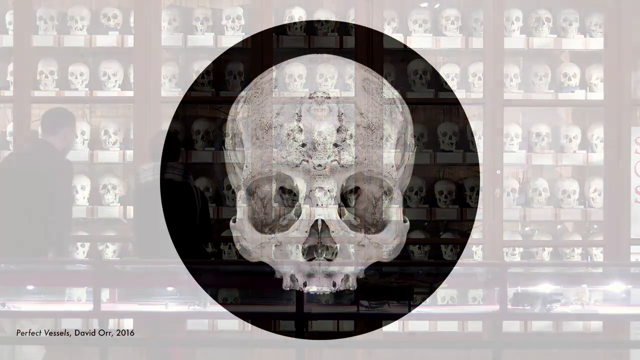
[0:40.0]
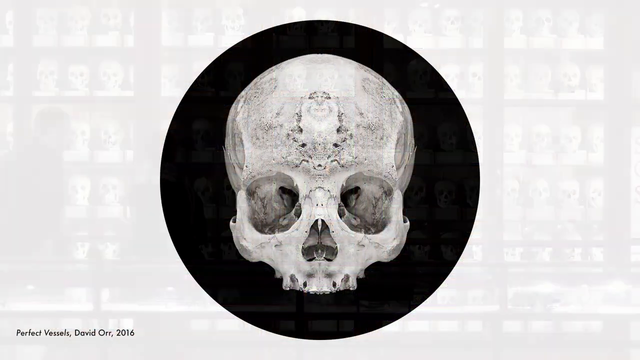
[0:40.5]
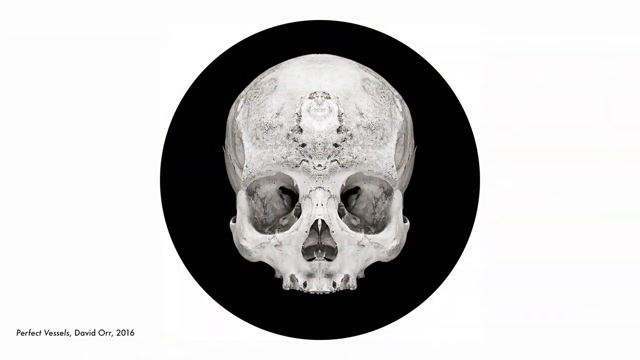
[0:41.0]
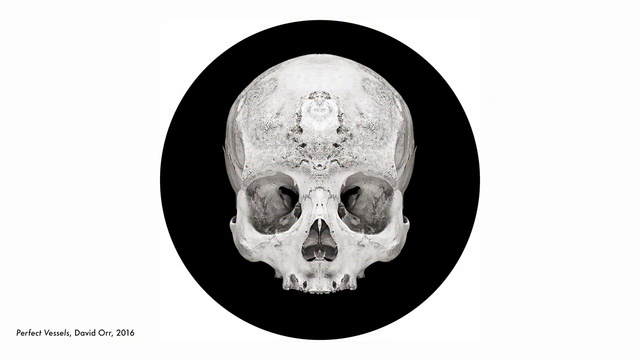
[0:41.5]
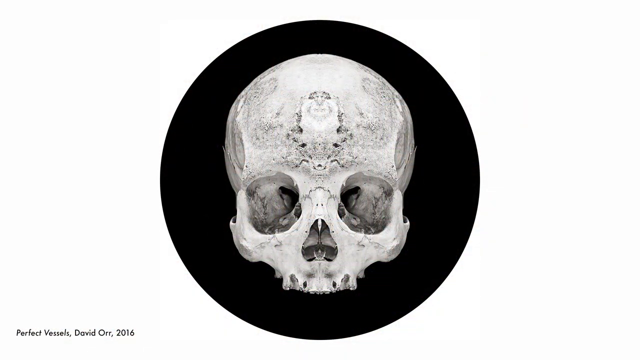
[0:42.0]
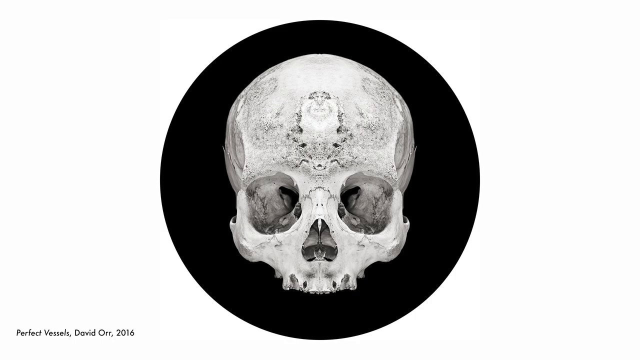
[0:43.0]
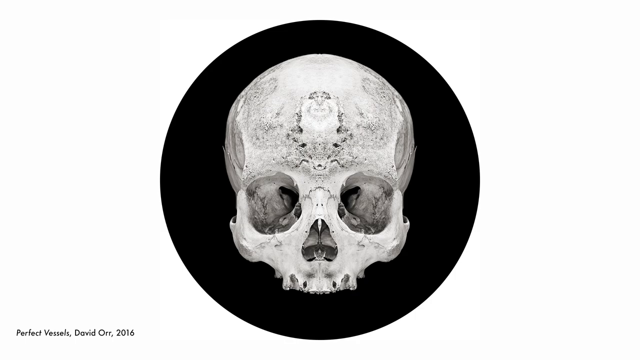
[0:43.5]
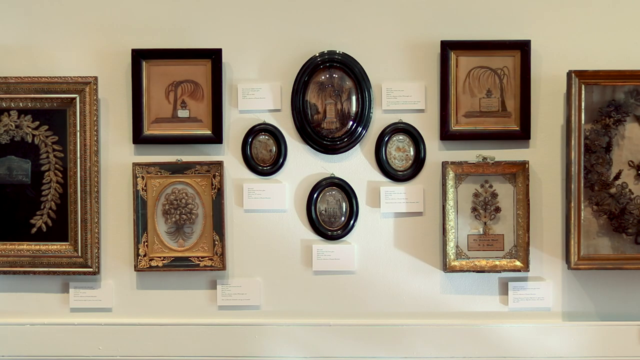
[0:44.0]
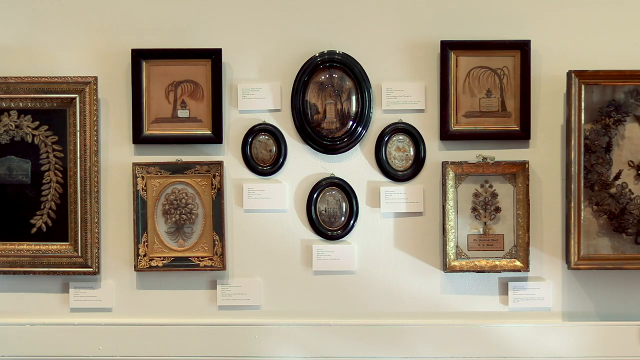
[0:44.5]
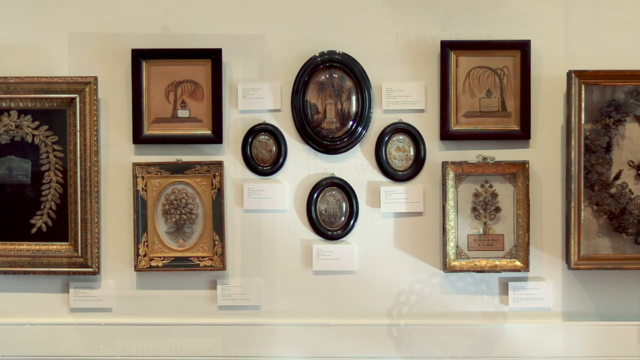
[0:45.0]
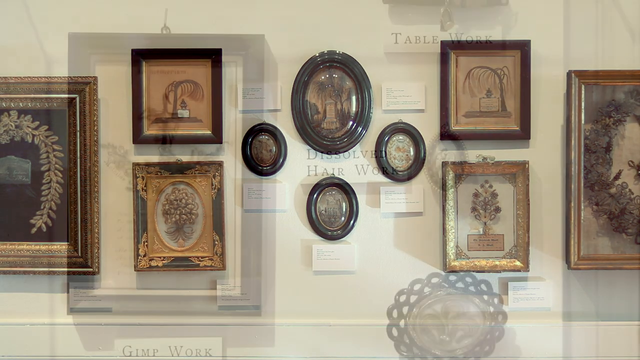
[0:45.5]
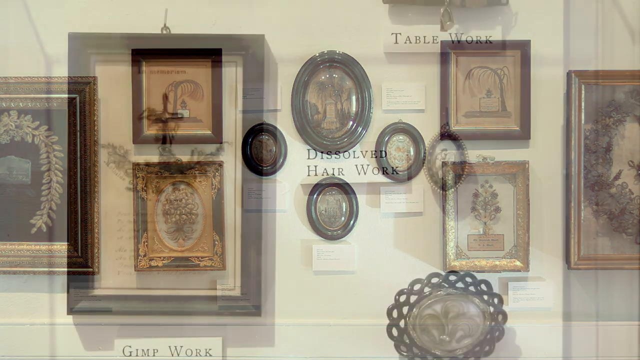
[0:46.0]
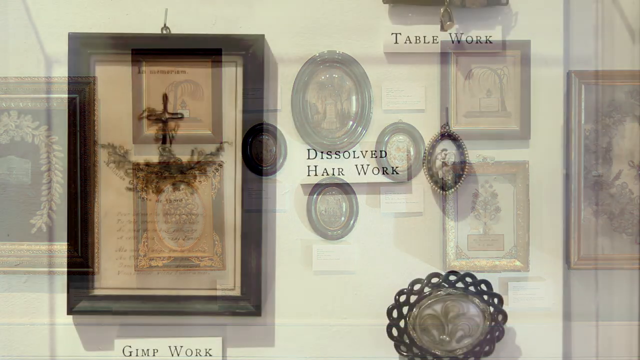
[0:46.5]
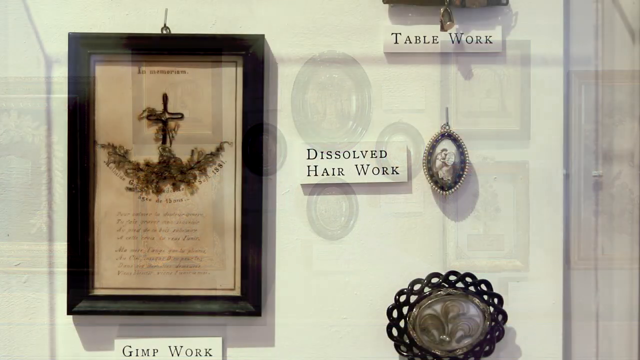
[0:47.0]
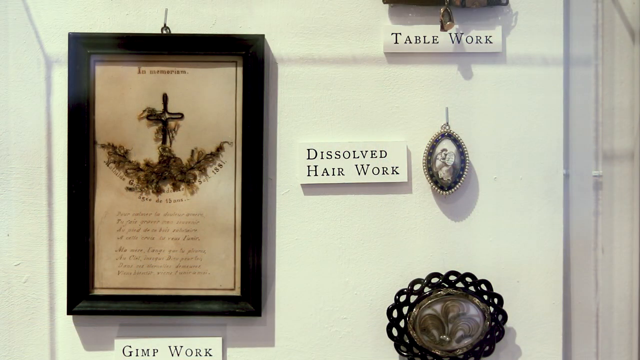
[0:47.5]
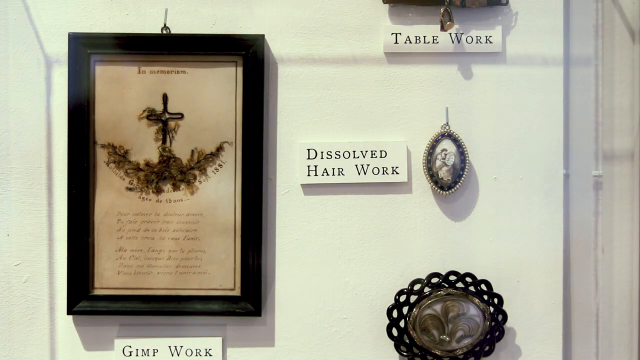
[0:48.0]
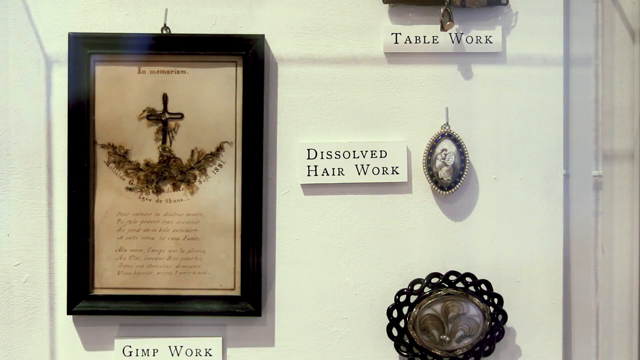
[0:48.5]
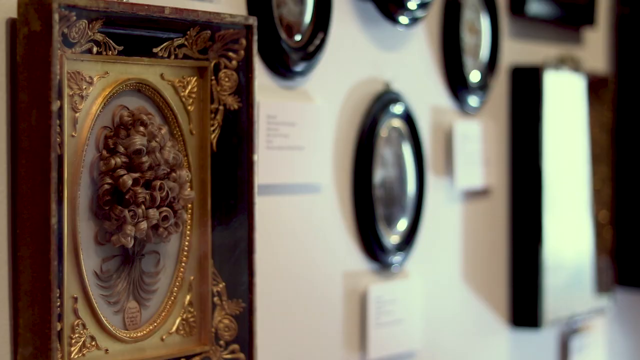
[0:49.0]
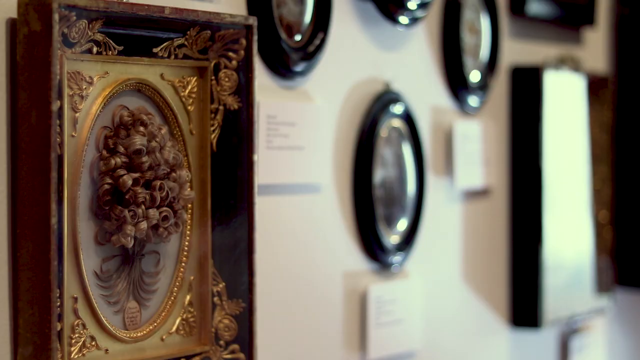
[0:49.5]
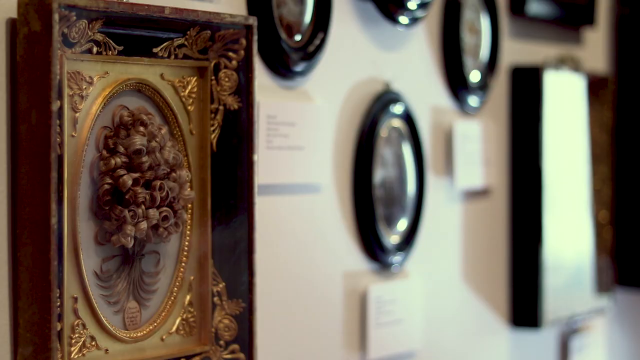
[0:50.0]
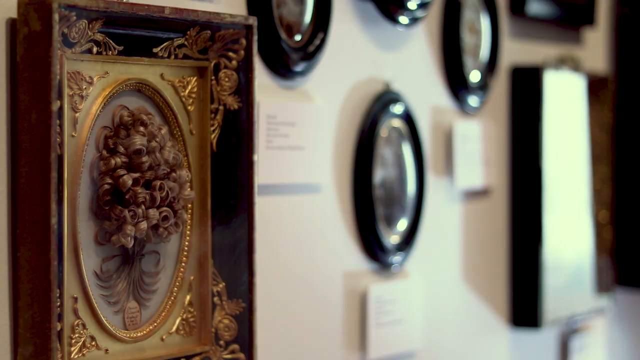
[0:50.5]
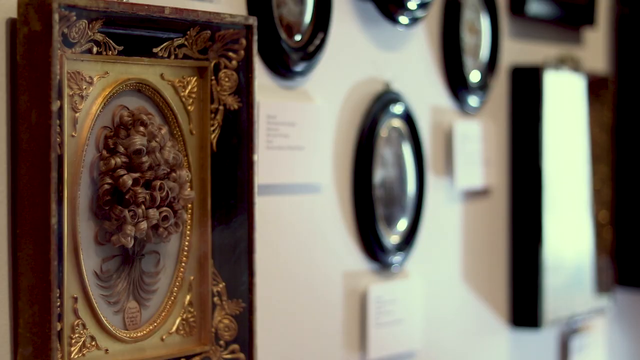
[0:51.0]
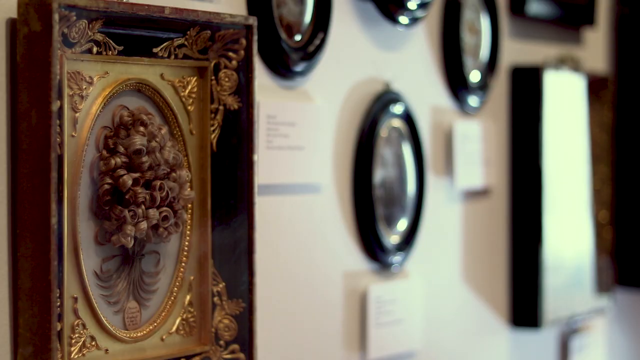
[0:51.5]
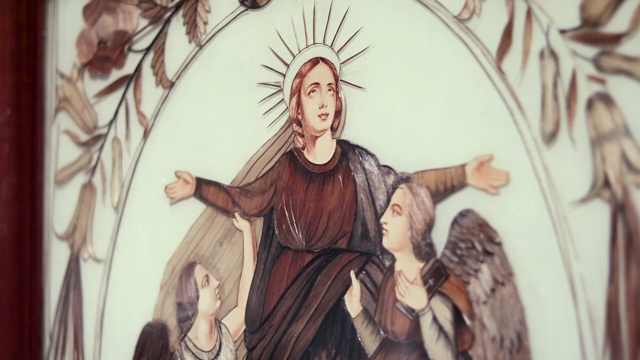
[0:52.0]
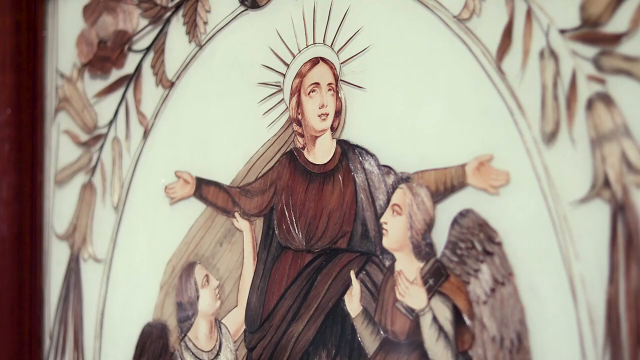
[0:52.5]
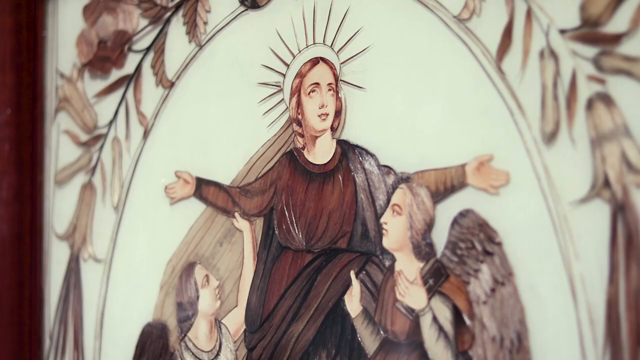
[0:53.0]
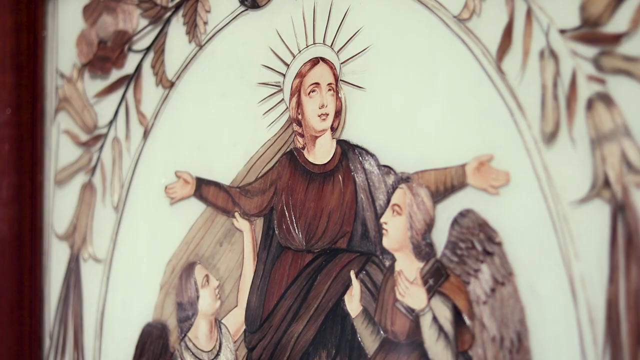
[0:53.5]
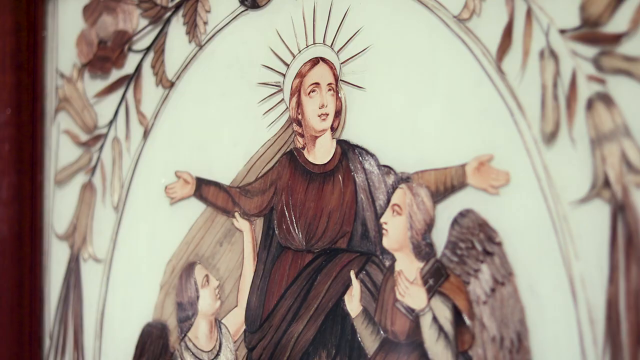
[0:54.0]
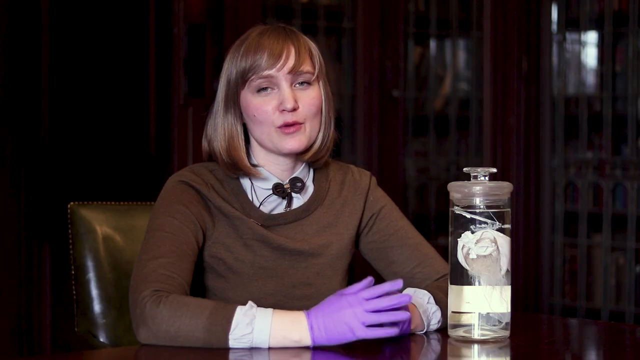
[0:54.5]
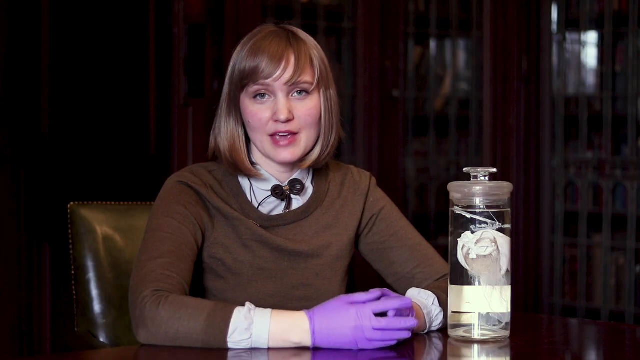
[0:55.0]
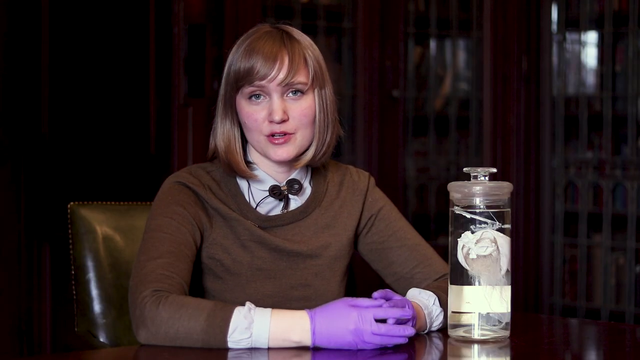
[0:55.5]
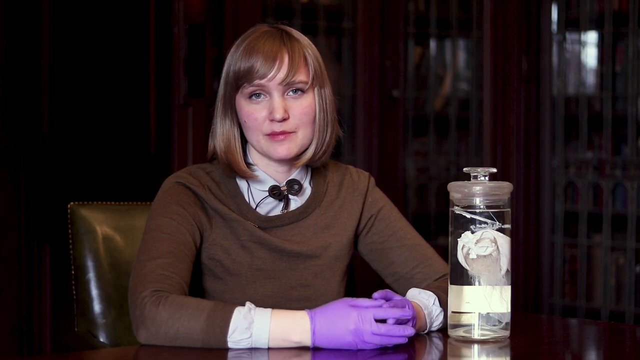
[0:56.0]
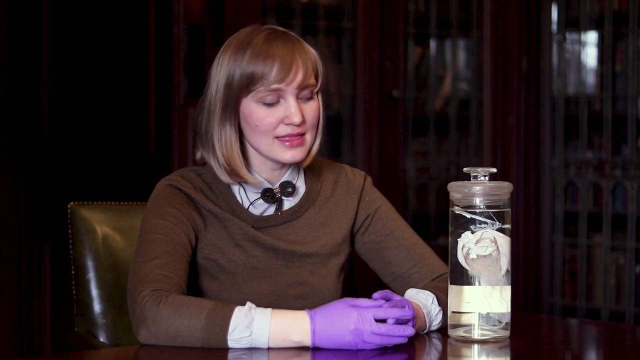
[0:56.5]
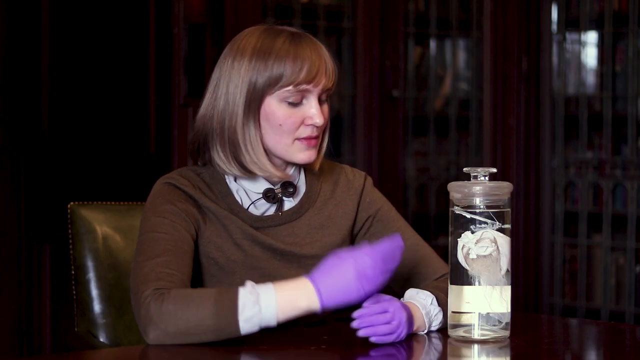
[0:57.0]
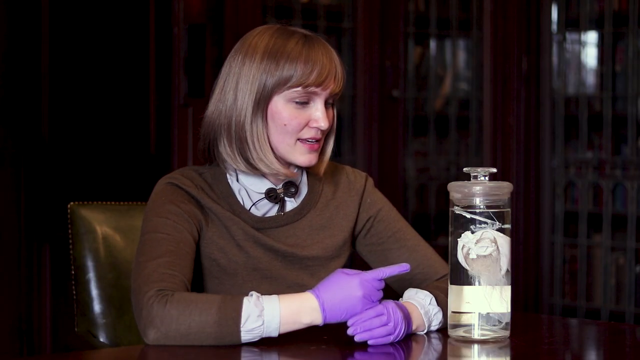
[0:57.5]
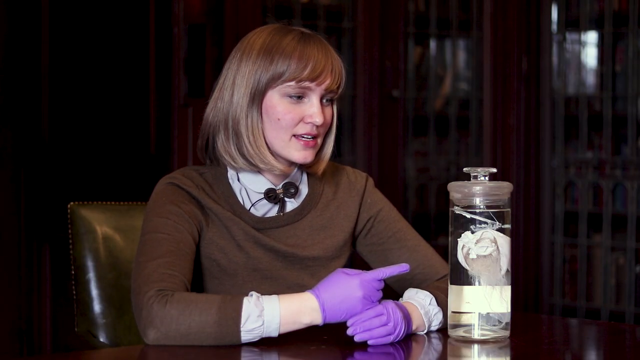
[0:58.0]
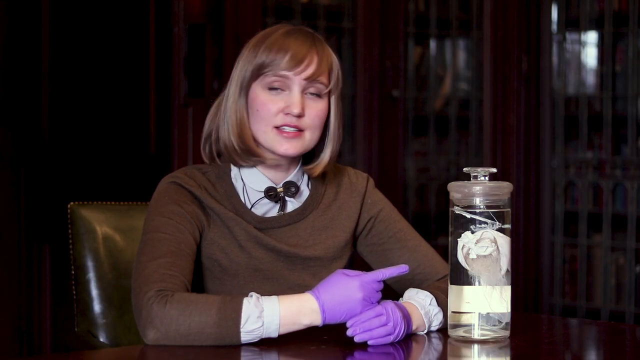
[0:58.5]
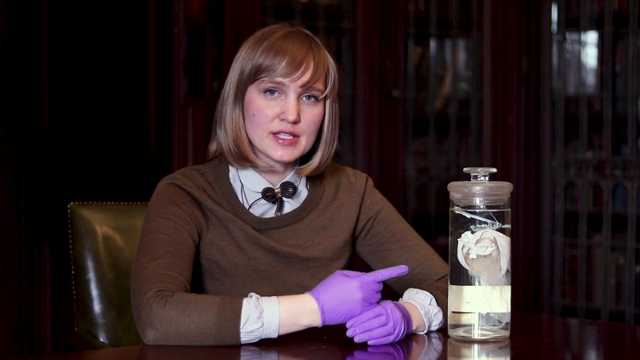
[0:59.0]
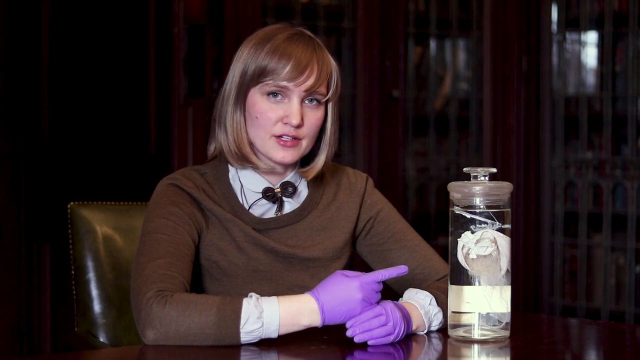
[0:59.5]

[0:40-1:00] A human skull, shown only down to the top jawbone, is in a black circle in the centre of the screen, with its eye holes and nose holes visible. The video cuts to a wall displaying frames of different shapes: four oval frames in the centre, one large one with three smaller ones beneath it; on either side of these are two rectangular frames, and beside those on either side is a larger rectangular frame. Another cut shows a small oval frame and a large rectangular frame, and a label on the wall reads "dissolved hair work". A side view then shows, within a picture frame, what looks like curled hair, surrounded by an ornate gold frame with a wider frame around that; reflections are visible in oval frames in the background. Next comes a religious-looking figure with spikes coming out of the top of her head. Then the woman from the beginning of the video appears, wearing purple disposable gloves.